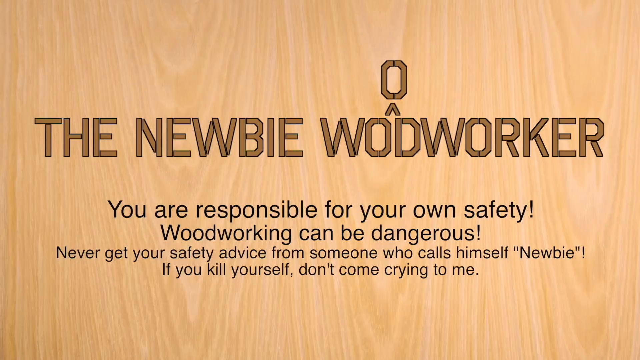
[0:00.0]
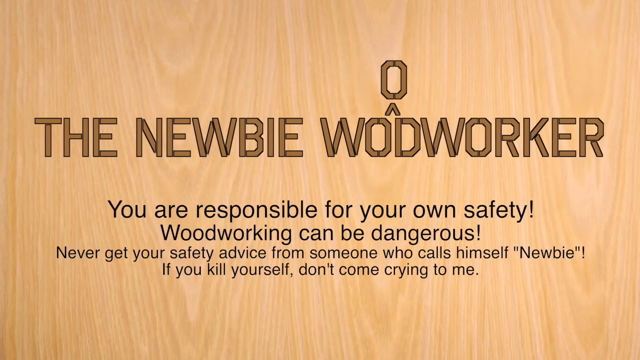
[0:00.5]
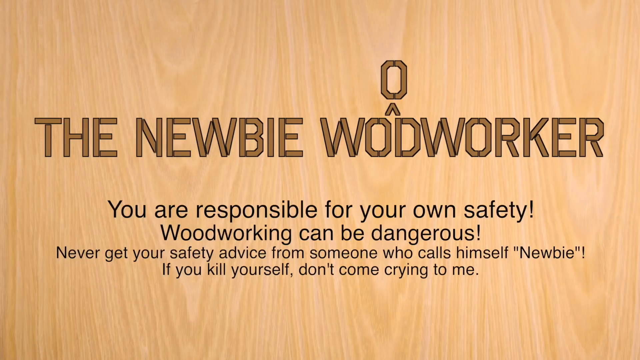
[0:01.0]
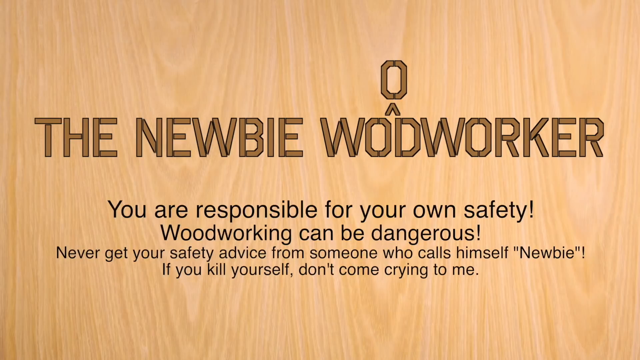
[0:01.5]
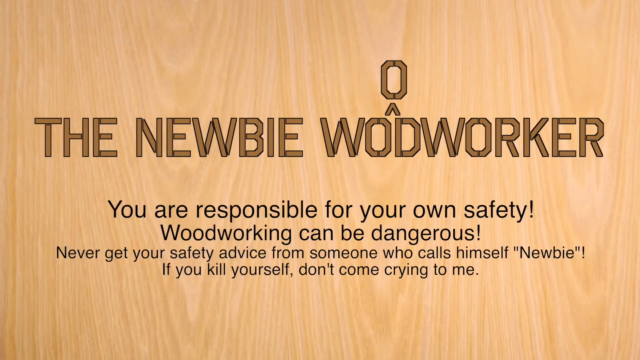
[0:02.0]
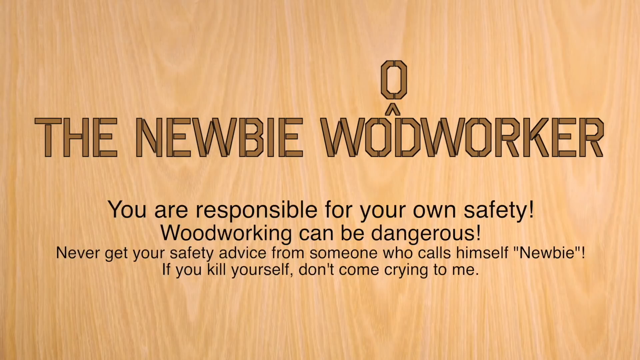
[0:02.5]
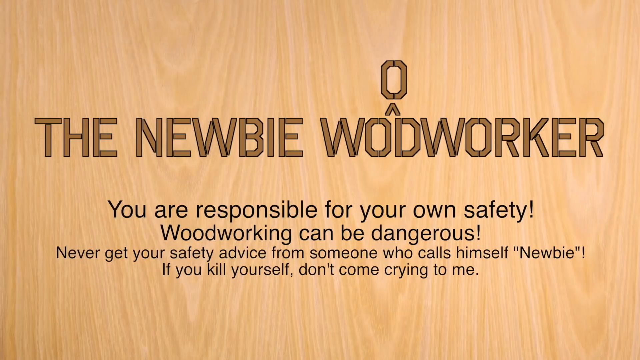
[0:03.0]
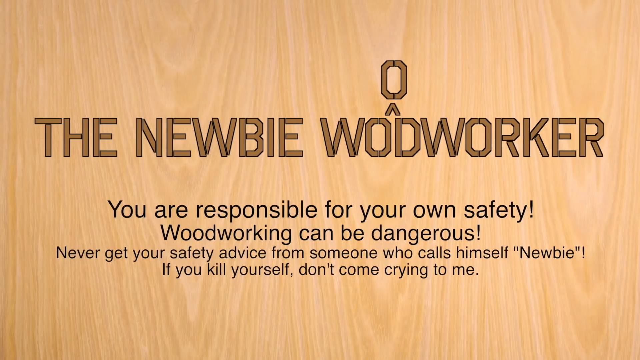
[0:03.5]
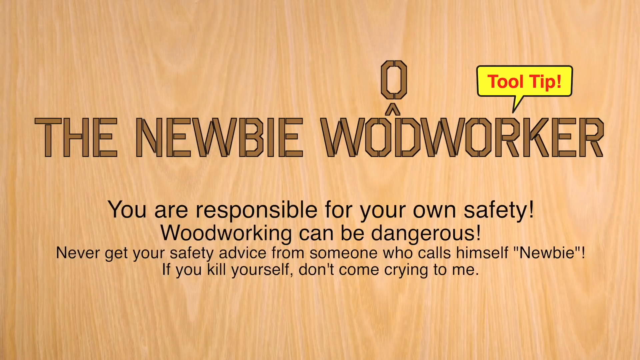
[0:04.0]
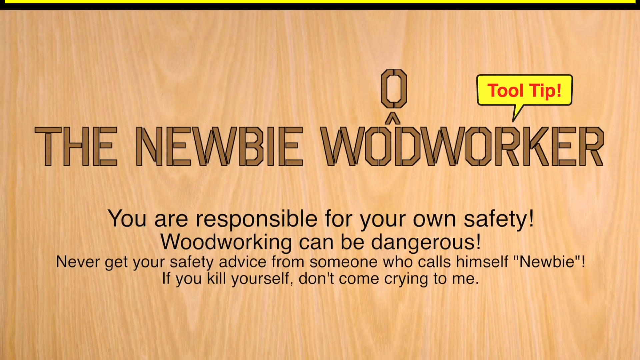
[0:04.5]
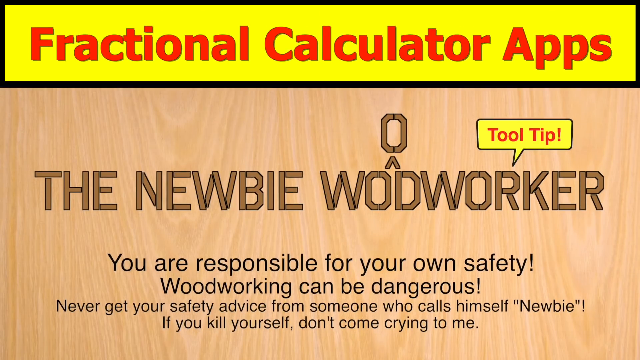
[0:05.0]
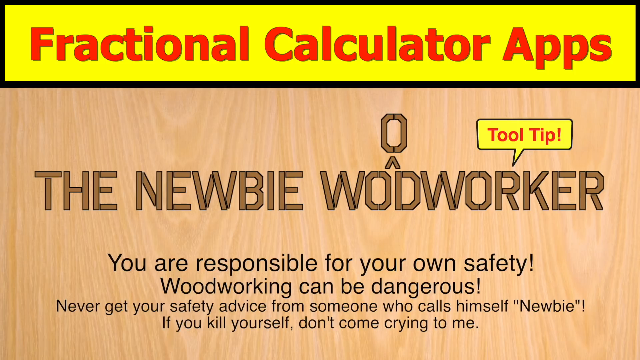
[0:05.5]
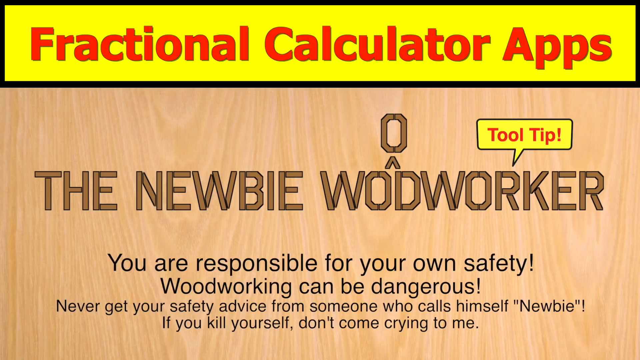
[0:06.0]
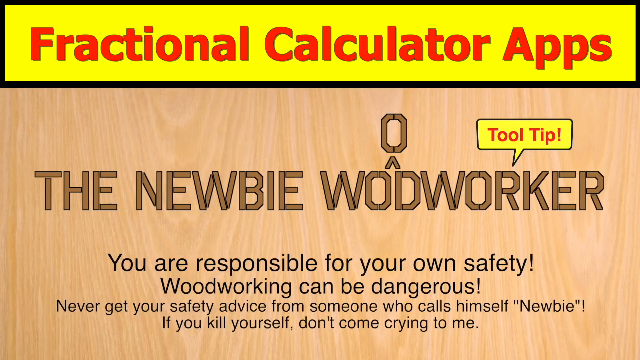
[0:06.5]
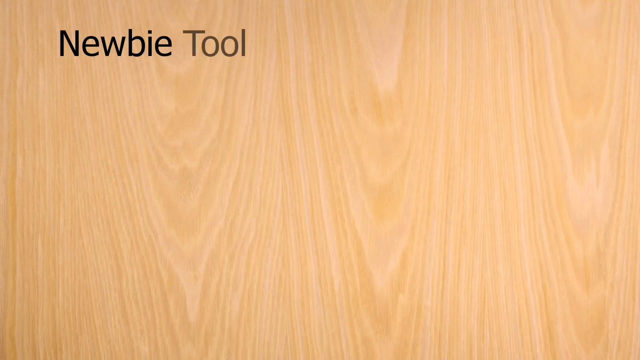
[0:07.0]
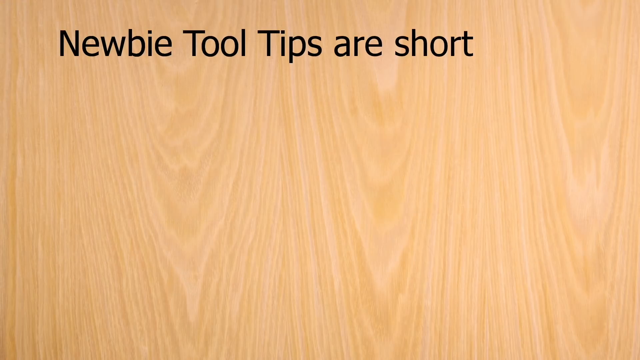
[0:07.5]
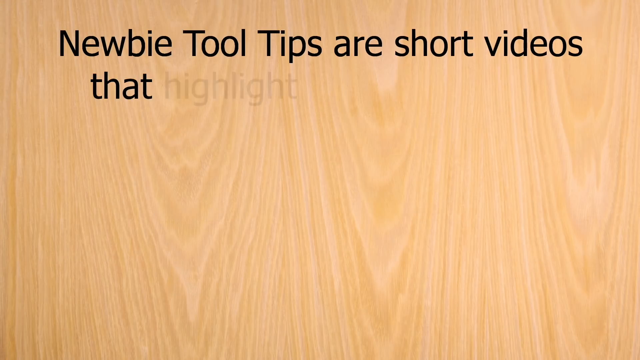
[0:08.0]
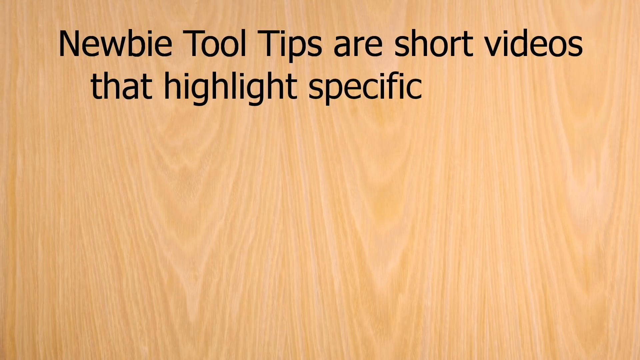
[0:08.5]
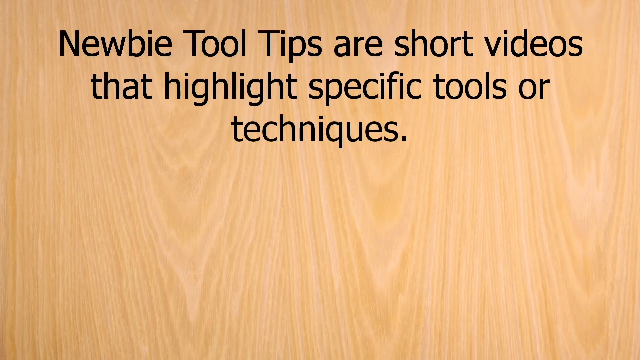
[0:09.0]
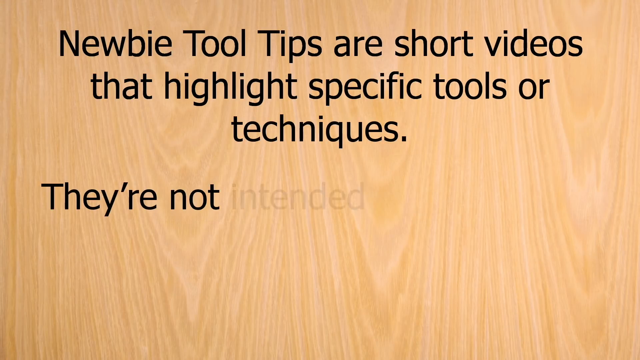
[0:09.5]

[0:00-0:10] The background is blonde wood with prominent, slightly darker grain. The first row of text reads "the newbie woodworker" in stylized, lumber-like letters, with the second O of "woodworker" appearing as a cute insert above the word. The next line, in a slightly smaller black, square font, reads "you are responsible for your own safety!" followed by "Woodworking can be dangerous!" In a slightly smaller font still: "Never get your safety advice from someone who calls himself newbie. If you kill yourself, don't come crying to me." Moments later, "CoolTip" and "Fractional Calculator apps" appear on the screen in yellow.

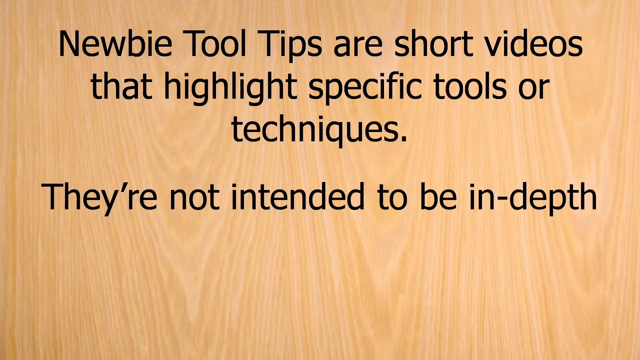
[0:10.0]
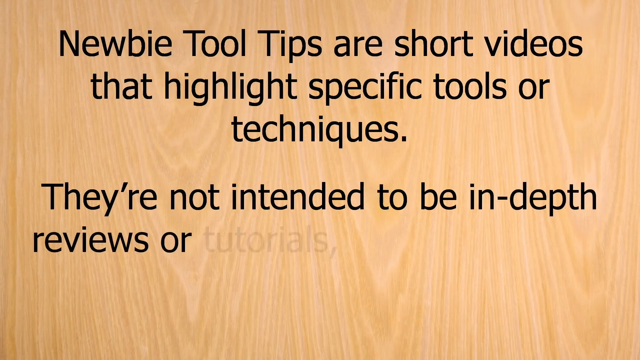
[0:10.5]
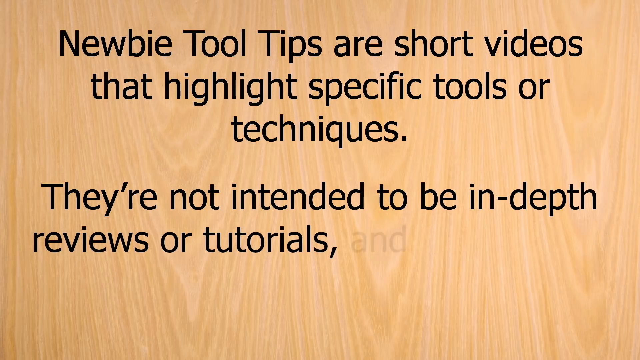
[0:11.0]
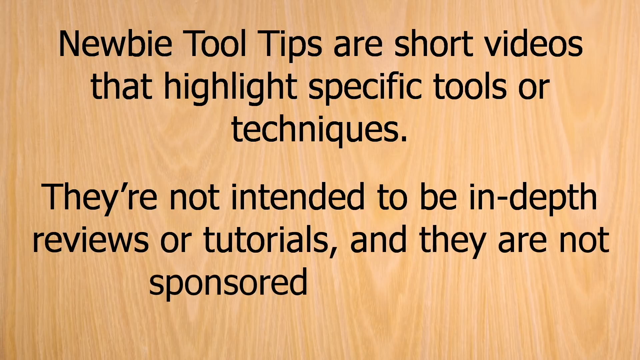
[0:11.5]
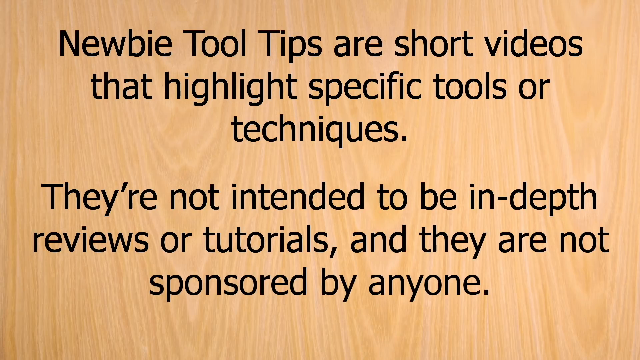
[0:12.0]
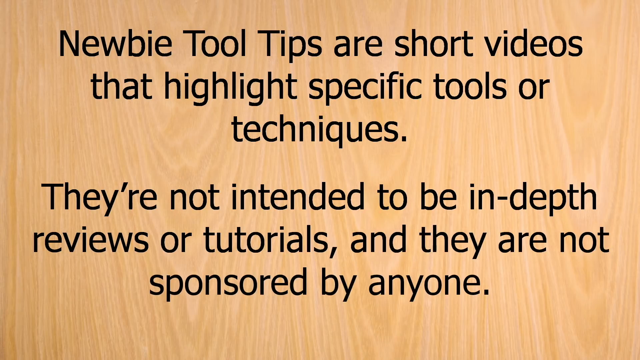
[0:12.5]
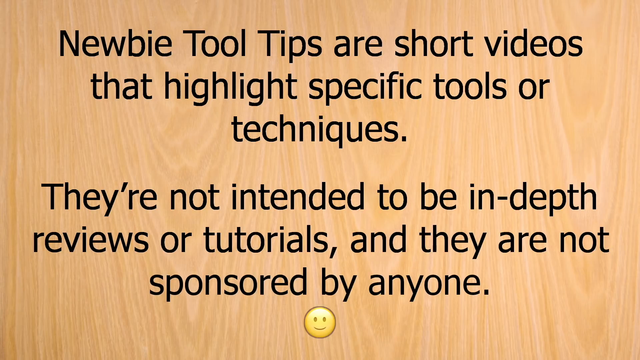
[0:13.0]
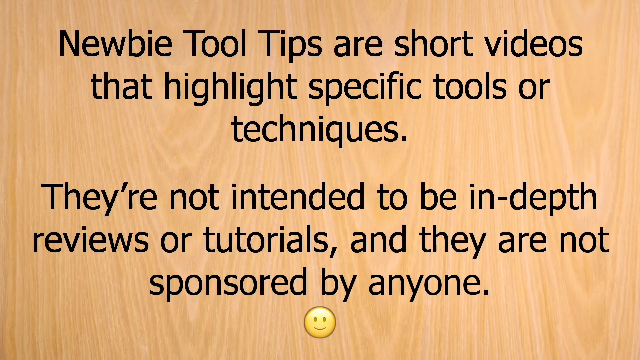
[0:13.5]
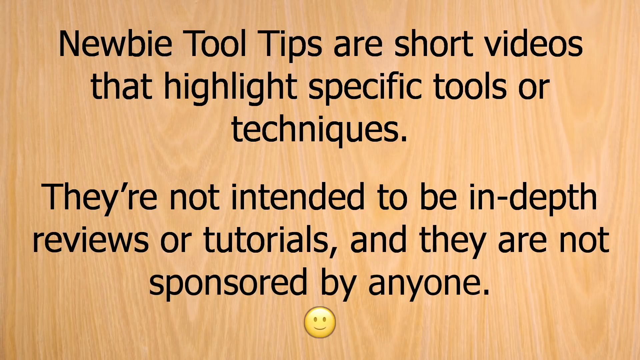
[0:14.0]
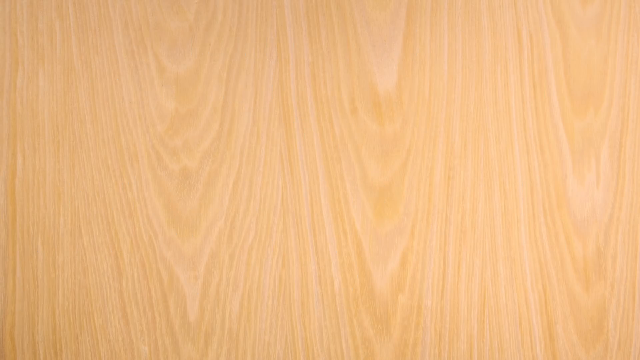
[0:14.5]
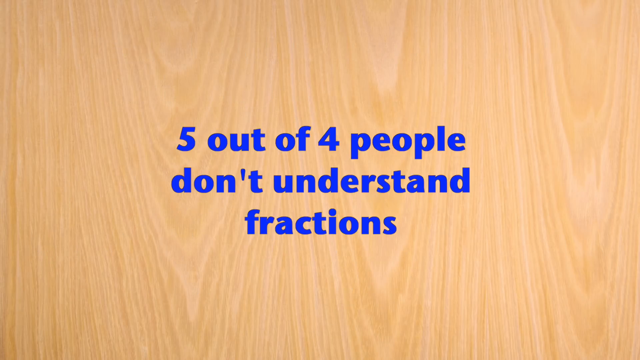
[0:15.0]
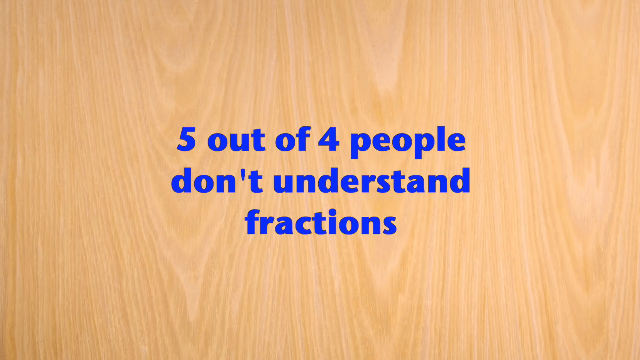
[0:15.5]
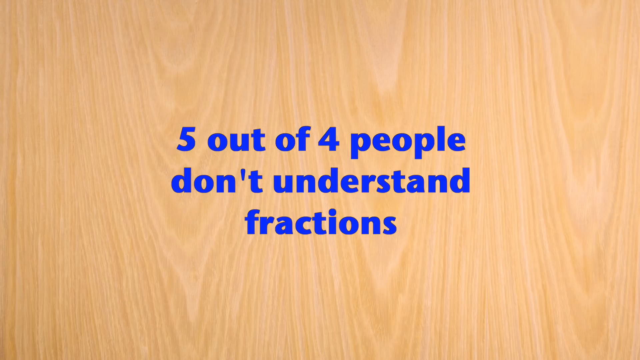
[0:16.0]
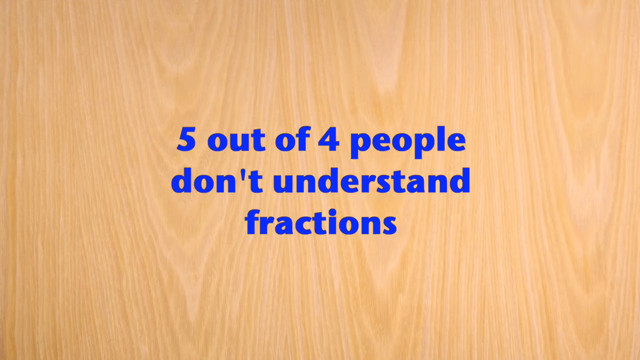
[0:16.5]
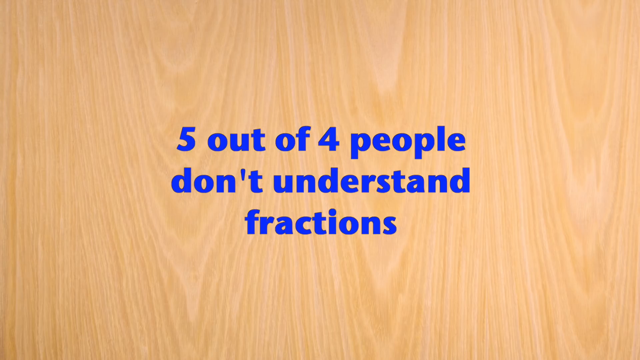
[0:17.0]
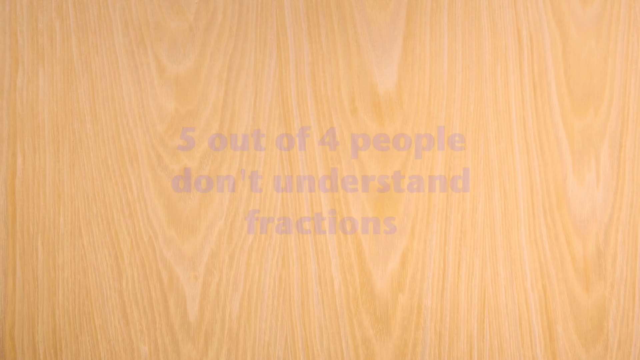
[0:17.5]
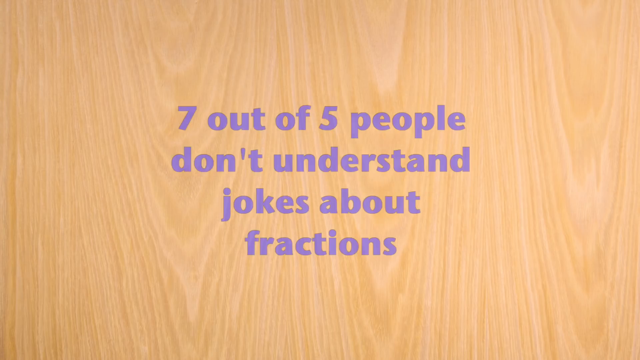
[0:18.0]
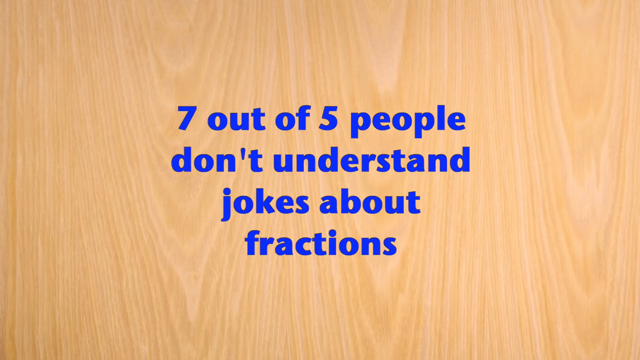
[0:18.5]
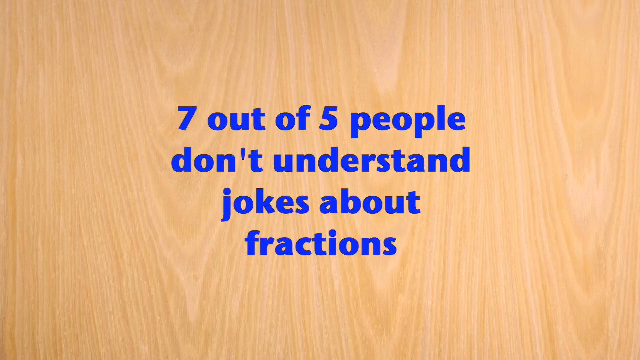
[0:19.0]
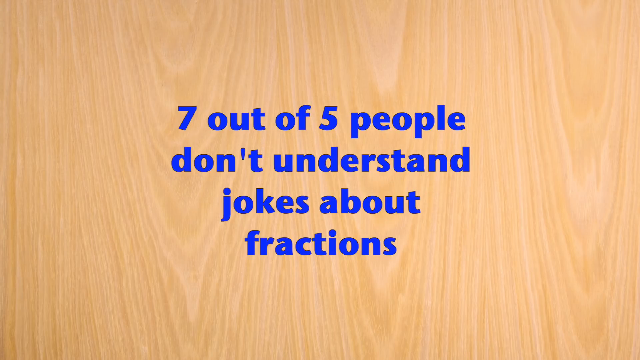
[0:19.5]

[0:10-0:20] The background is still blonde wood with a slightly darker, distinct grain pattern throughout. The text now reads "Newbie tool tips are short videos that highlight specific tools or techniques. They are not intended to be in-depth reviews or tutorials and they are not sponsored by anyone." This text vanishes and is replaced by bold blue text reading "5 of 4 people don't understand fractions." That in turn vanishes and is replaced by "7 of 5 people don't understand jokes about fractions." The lettering appears and disappears sharply, and a smiley face is occasionally on the screen.